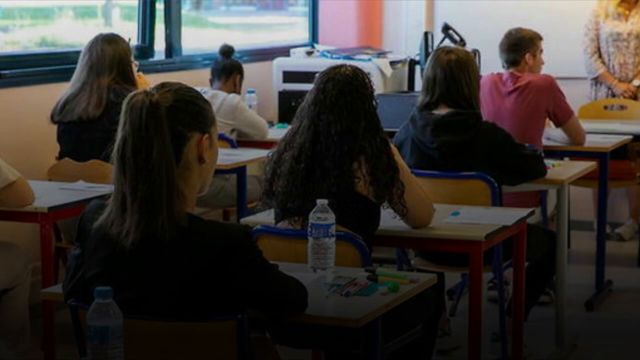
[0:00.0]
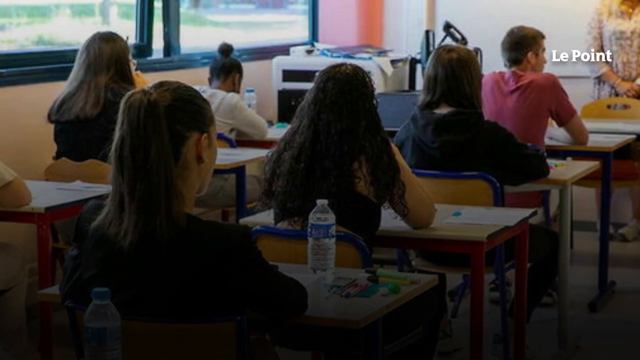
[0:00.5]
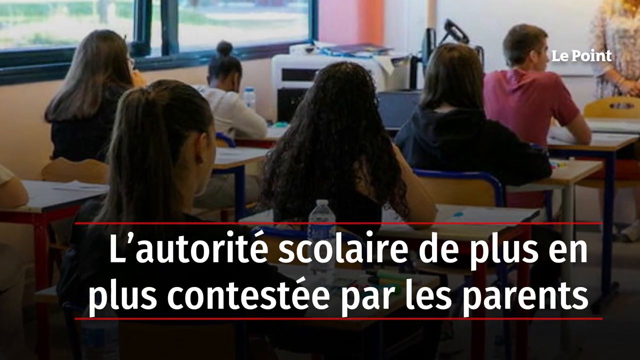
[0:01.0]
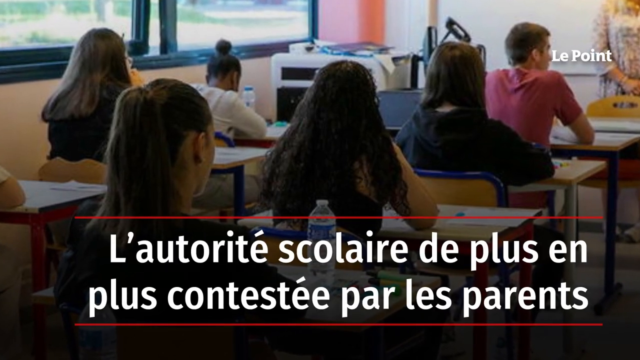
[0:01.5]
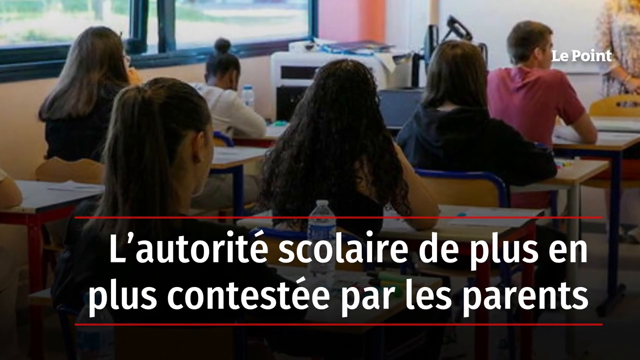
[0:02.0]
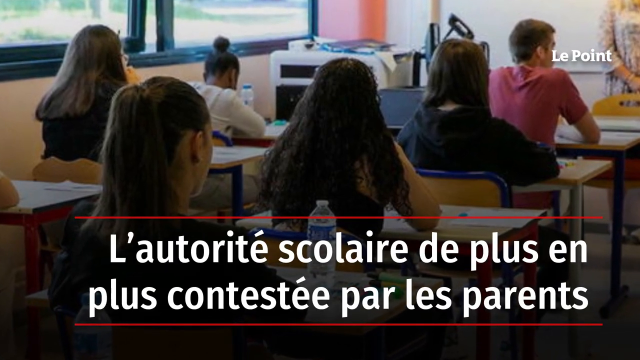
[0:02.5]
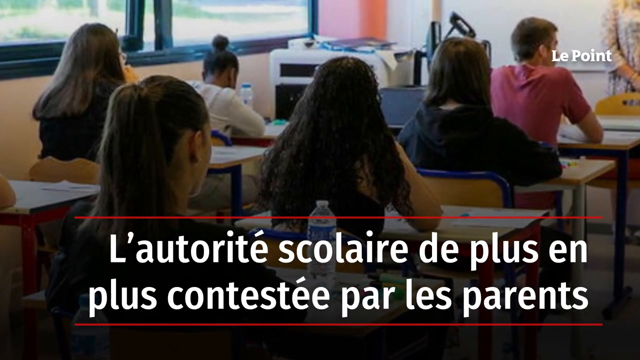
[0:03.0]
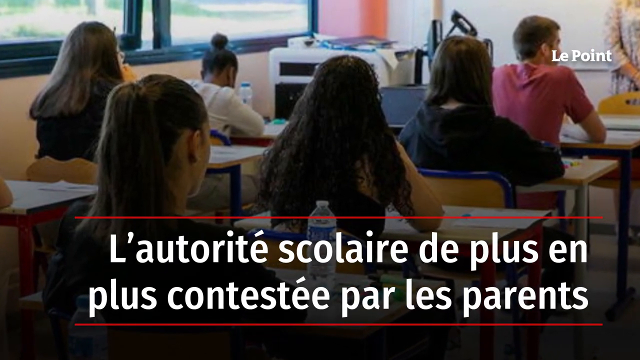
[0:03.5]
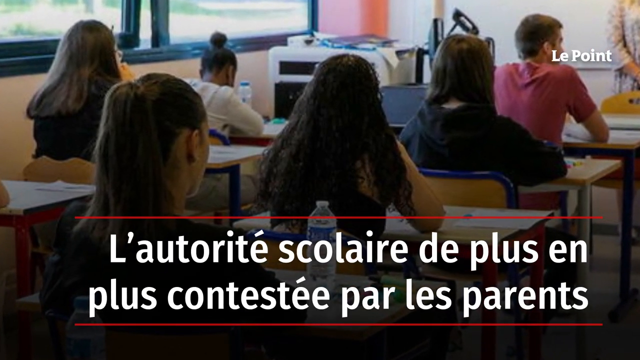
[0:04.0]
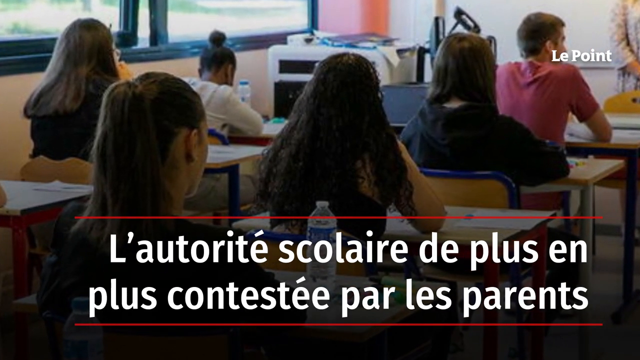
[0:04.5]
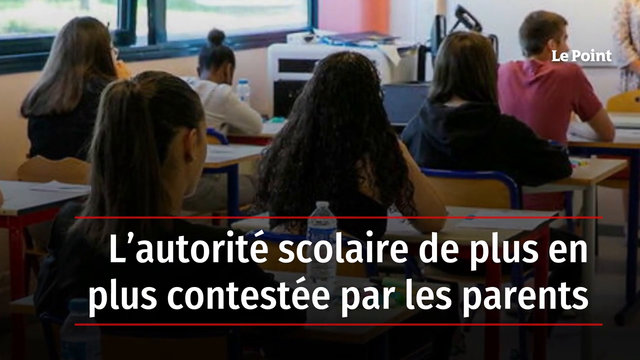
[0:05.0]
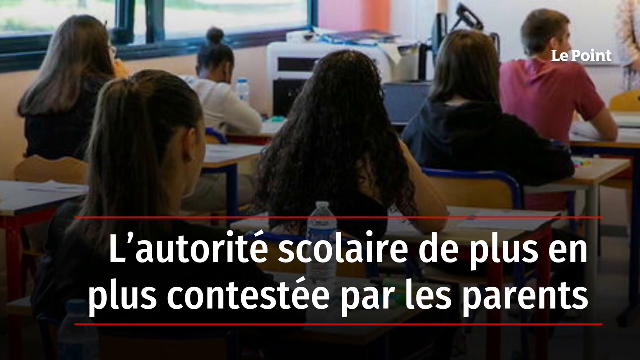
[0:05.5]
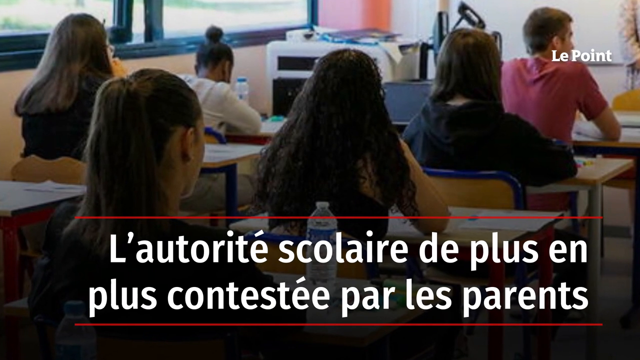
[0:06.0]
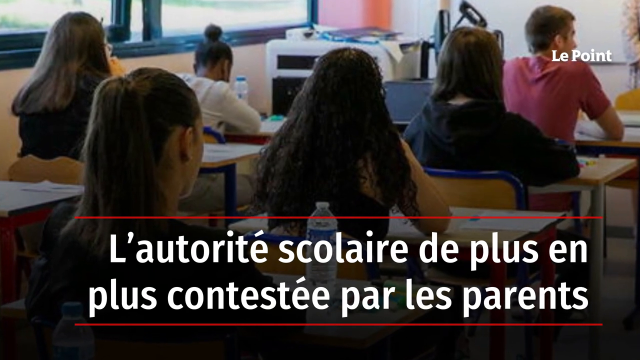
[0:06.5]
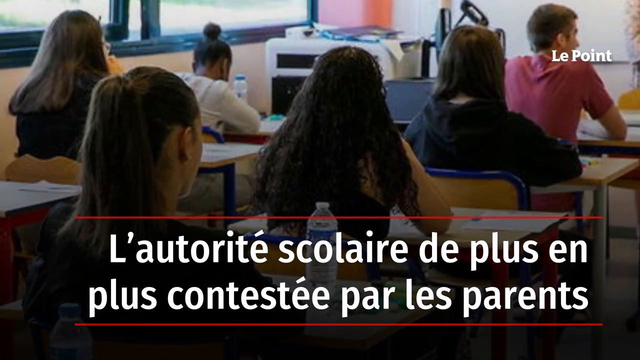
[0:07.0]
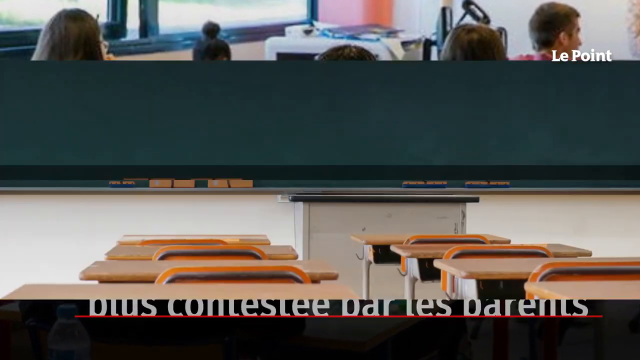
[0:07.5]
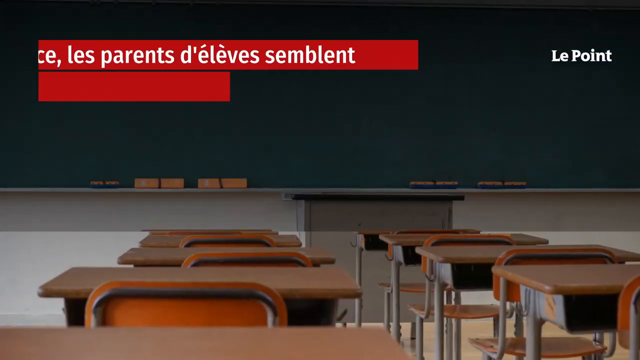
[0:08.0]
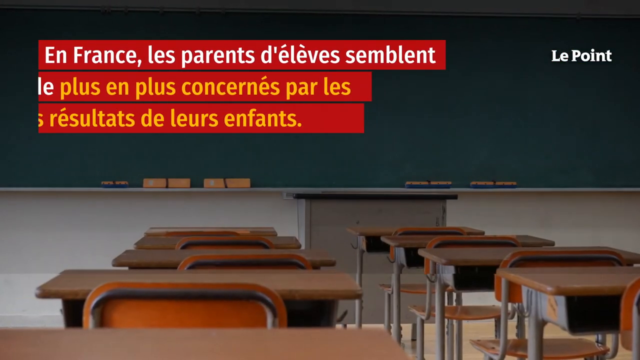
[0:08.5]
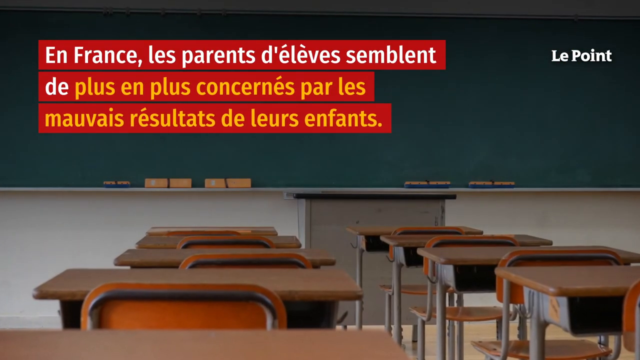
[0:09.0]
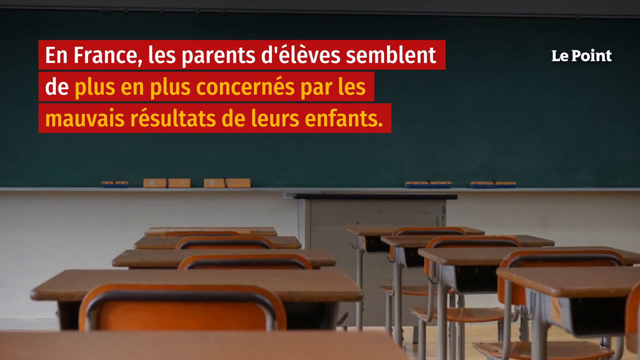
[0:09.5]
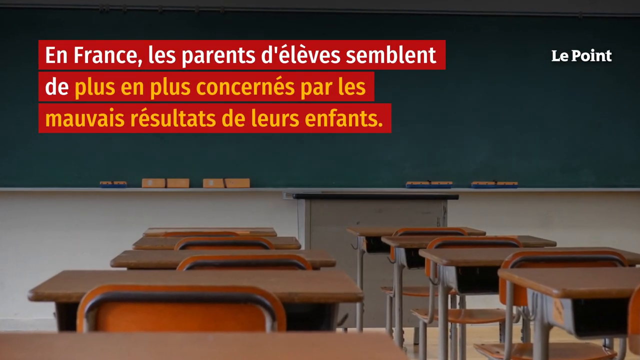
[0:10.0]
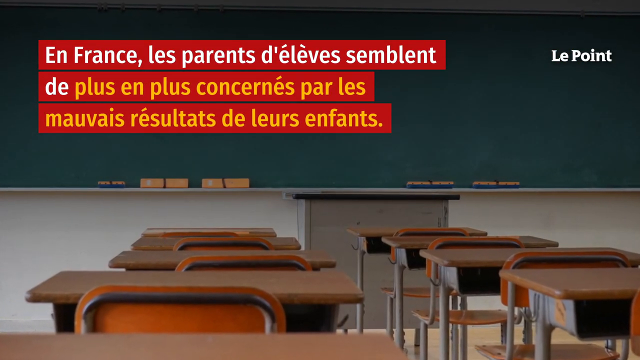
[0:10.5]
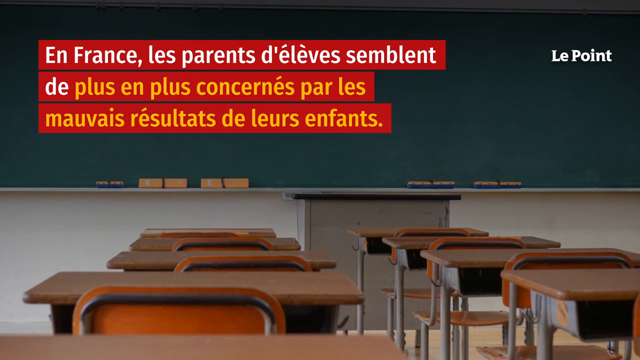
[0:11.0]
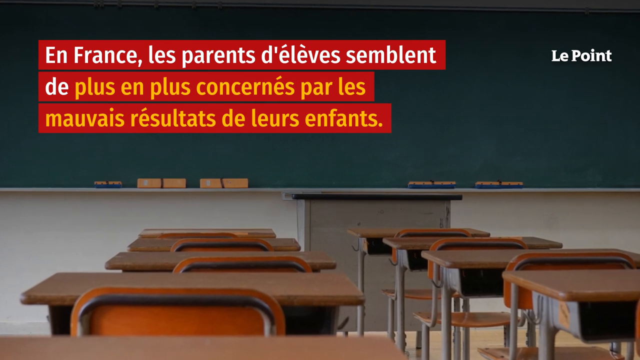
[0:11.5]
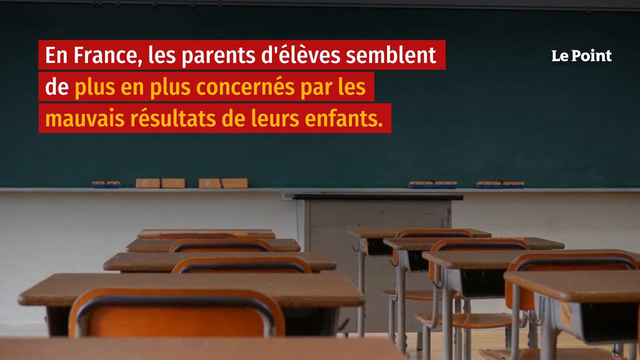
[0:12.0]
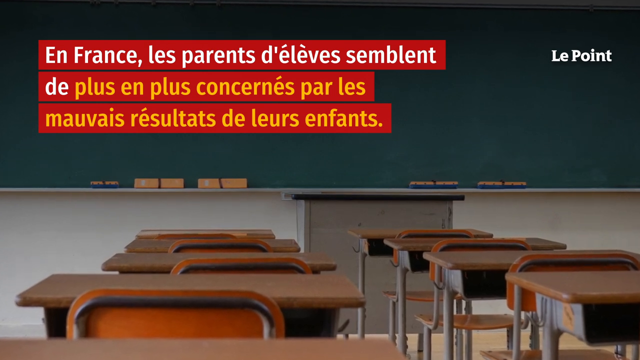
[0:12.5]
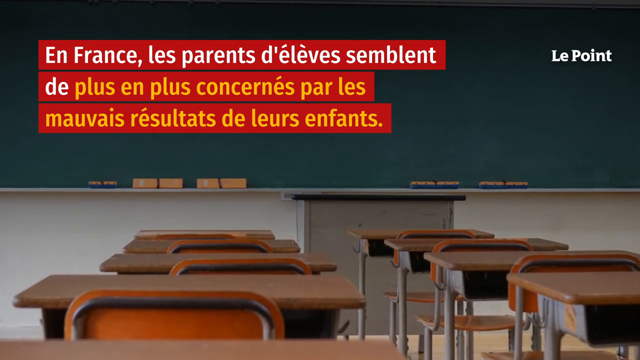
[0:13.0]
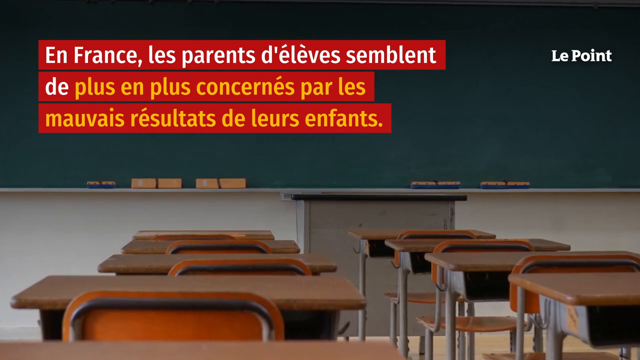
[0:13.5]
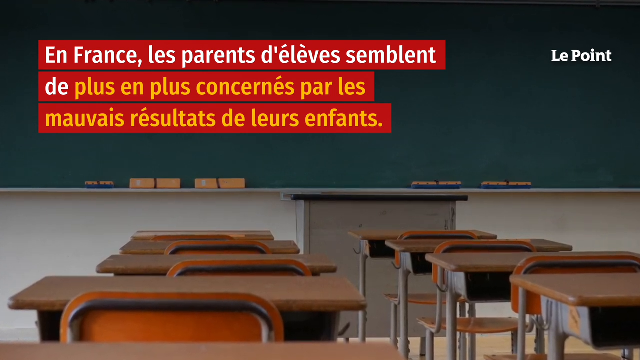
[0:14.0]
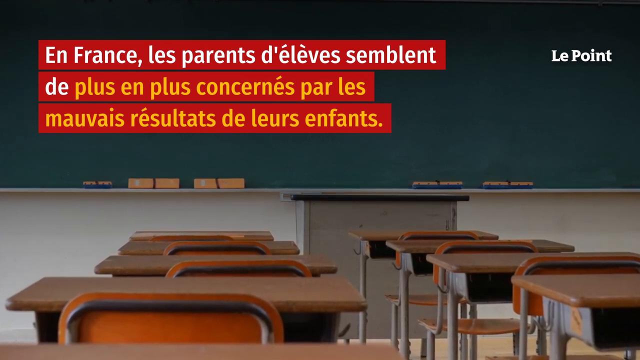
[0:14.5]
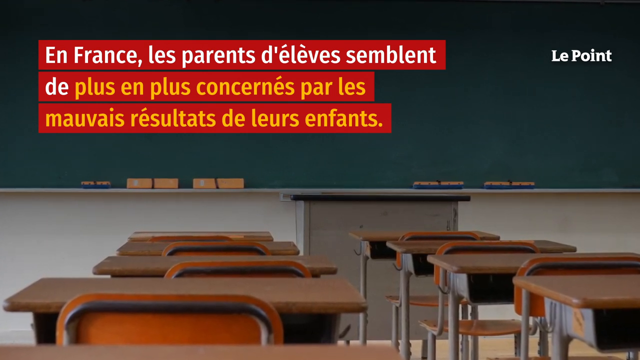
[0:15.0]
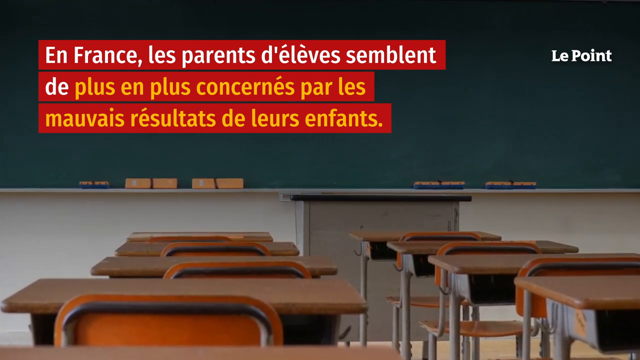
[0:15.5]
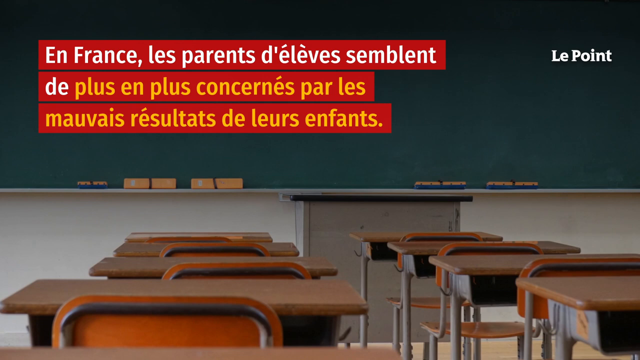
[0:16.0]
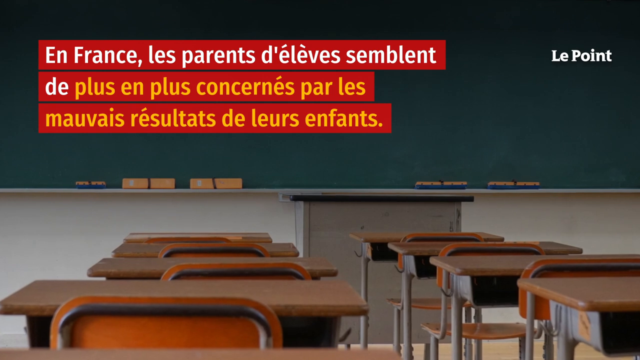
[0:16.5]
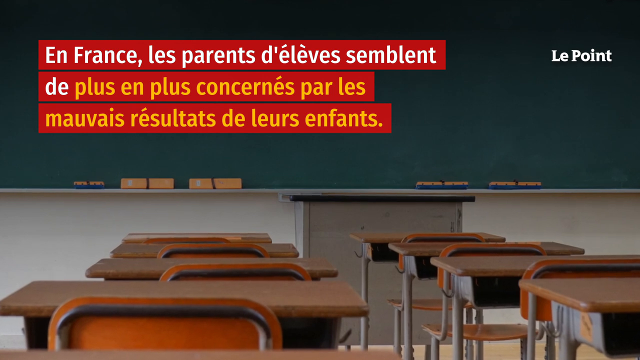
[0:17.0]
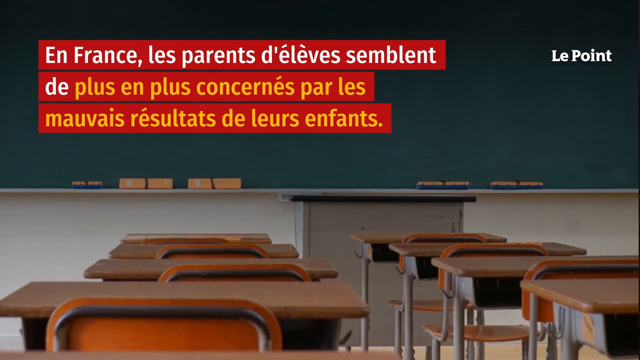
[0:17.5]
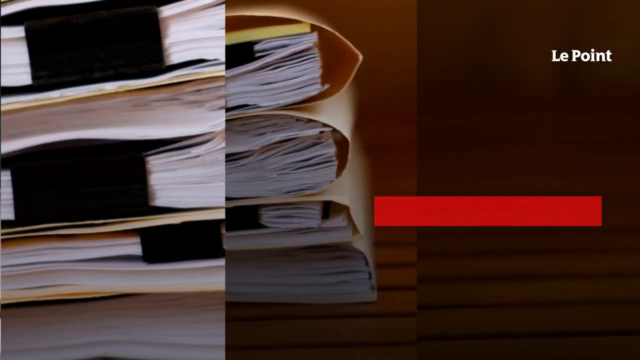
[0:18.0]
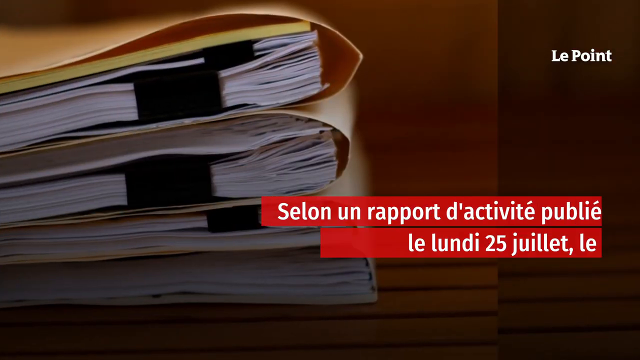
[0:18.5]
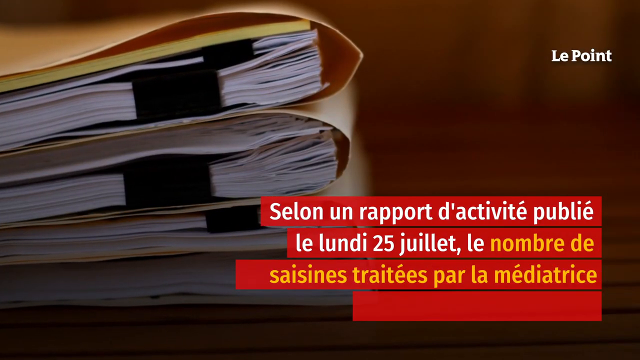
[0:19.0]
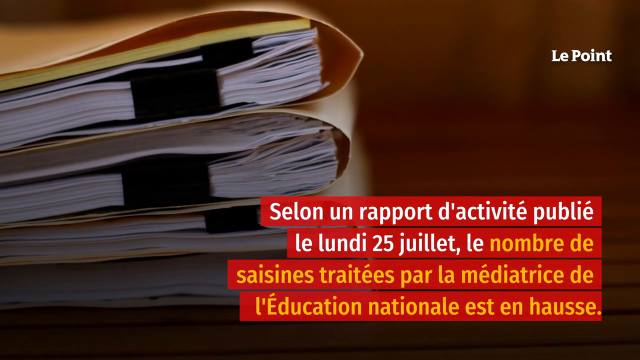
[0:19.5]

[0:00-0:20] A still image shows a group of kids sitting in a classroom, each at an individual desk; the kids are definitely a little larger in size. The shot is taken from behind them, so only the backs of their heads are visible, and a little of the teacher standing at the front can be seen. Text that is not in English covers the bottom half of the screen, with something like a red line over it, and it does seem to say something about parents. The screen then switches to another classroom where all the desks are empty. There is what looks like a chalkboard at the front, and red banners with white writing appear; in the second banner, partway through, the writing switches to orange. The text appears to be talking about classrooms. Erasers and similar items are visible along the bottom of the chalkboard, and the teacher's desk can be seen. The screen switches again to what looks like maybe grading papers: manila folders stuffed with papers, held by very large paper clips with a black part at the end, about four of them. More text pops up in the red banner, half in a white font and half in an orange font.